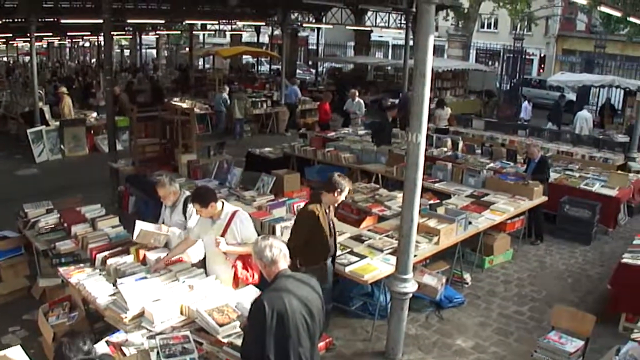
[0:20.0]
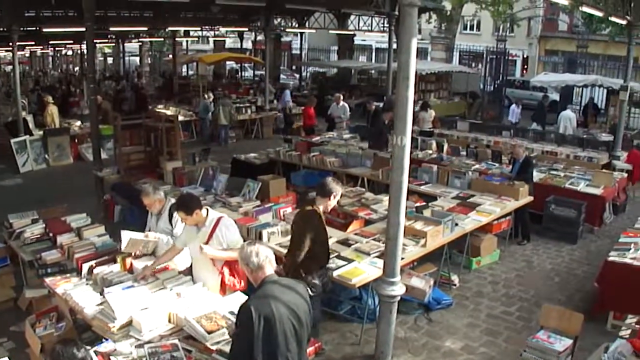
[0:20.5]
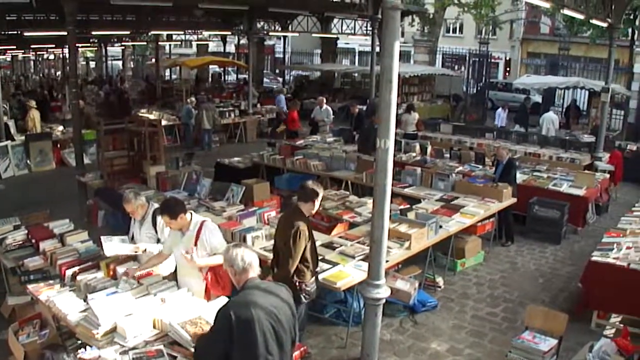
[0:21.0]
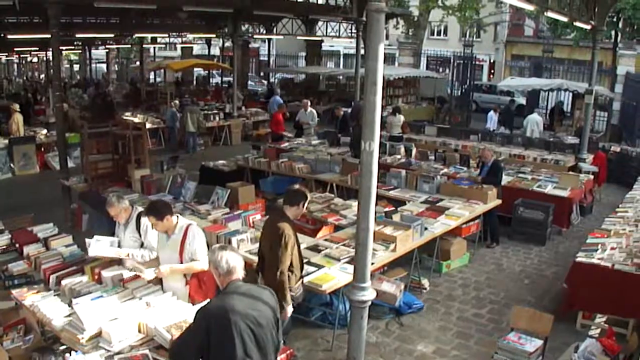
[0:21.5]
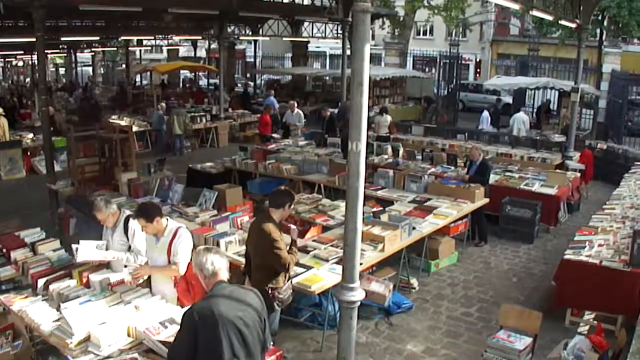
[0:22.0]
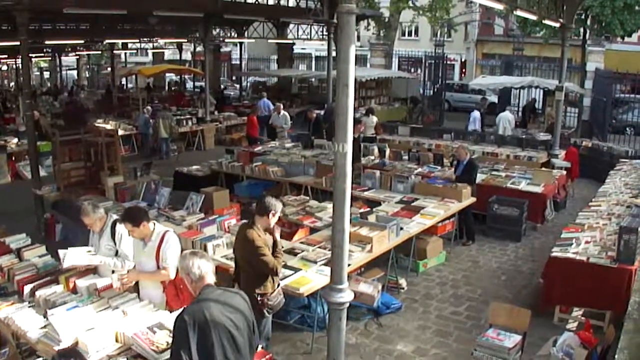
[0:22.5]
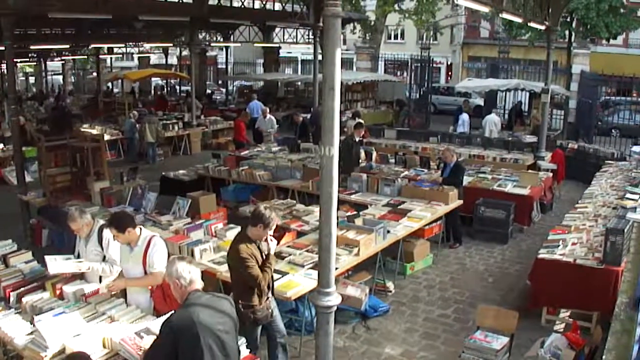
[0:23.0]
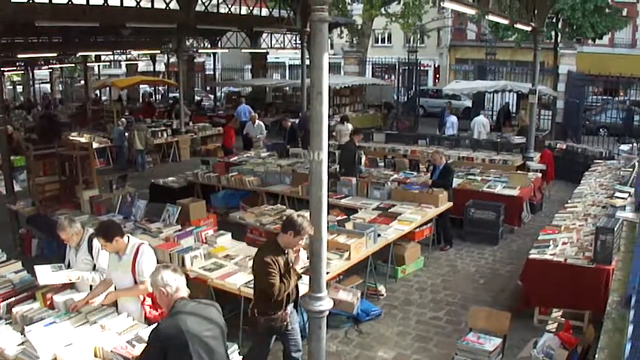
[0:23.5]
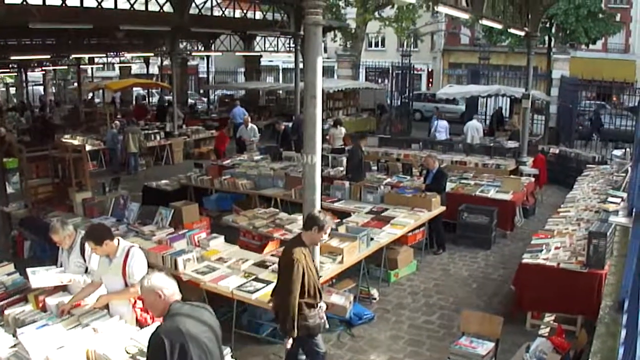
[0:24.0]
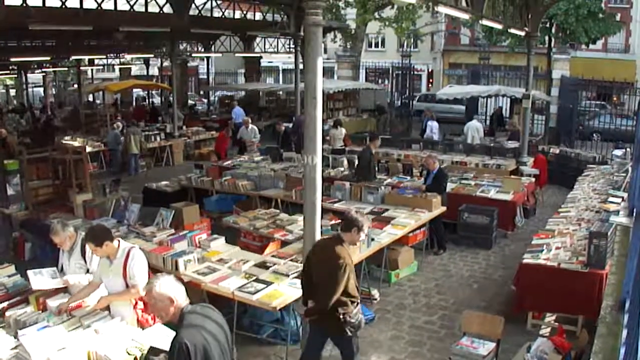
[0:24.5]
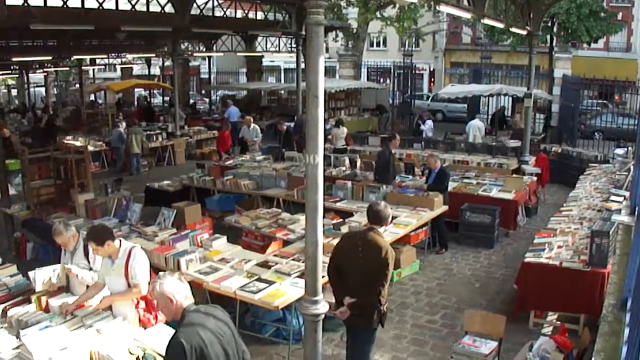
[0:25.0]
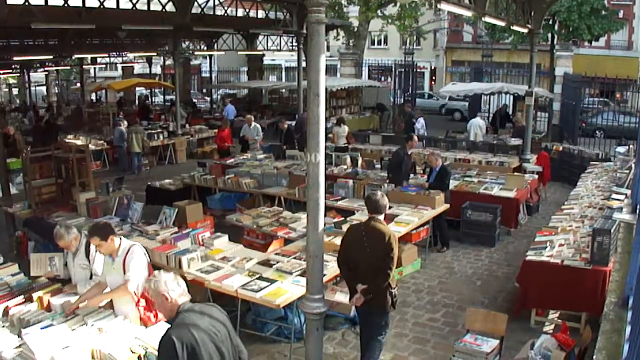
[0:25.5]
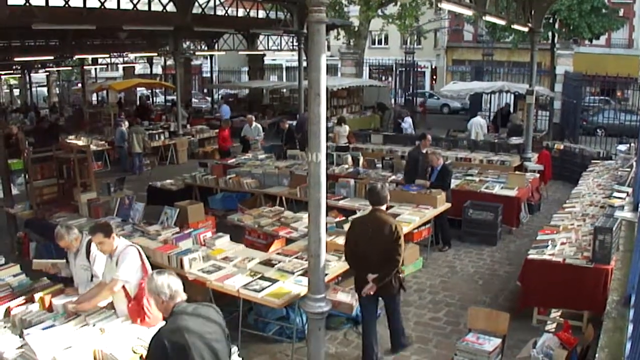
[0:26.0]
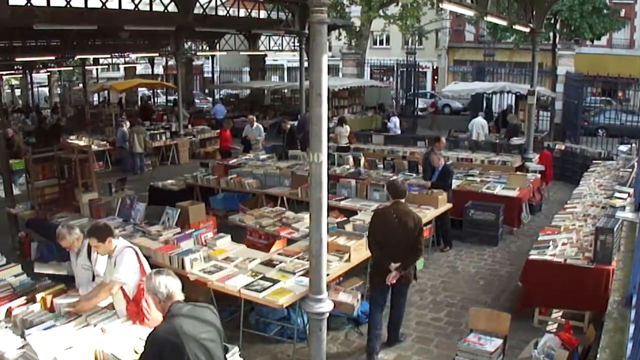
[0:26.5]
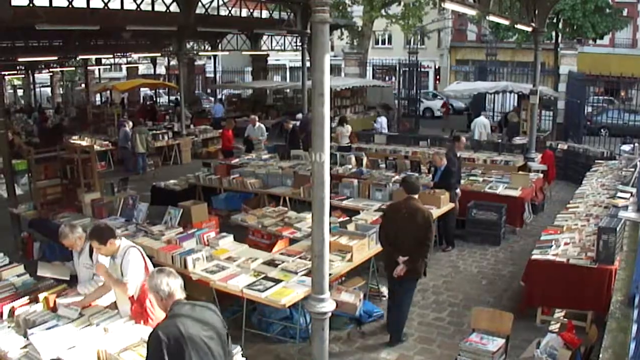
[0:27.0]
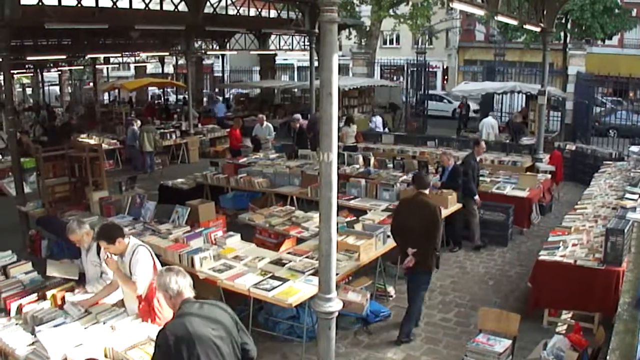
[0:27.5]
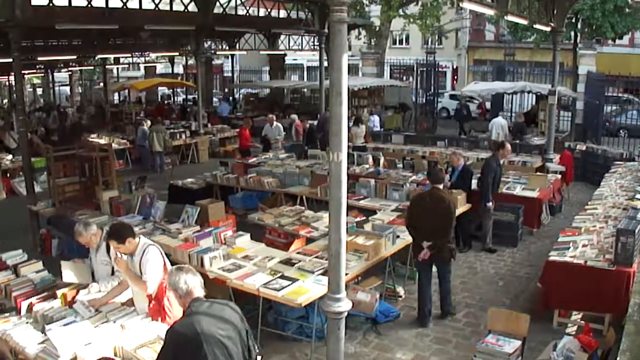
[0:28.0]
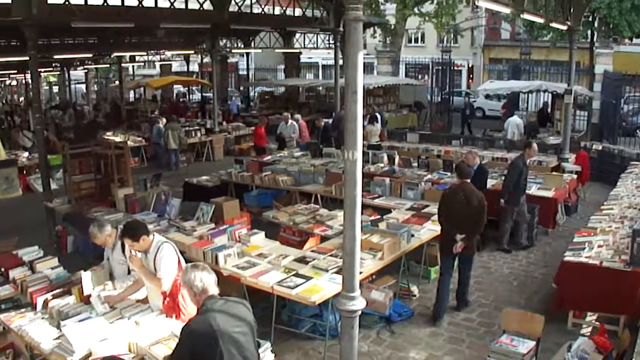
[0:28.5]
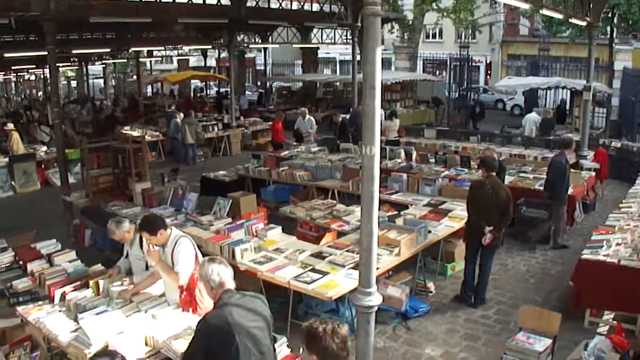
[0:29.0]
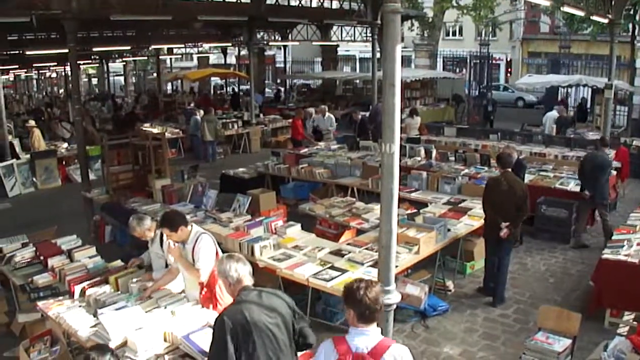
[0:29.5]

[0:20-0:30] Outdoor shopping takes place in what looks like a Main Street area of a charming town. Under what is perhaps temporary roofing, lines of tables are all covered in used books. The books are aged, some with bent covers, and some are stacked in boxes and trays. Shoppers browse the books as they walk around. Across the street from the book sale are some charming stores with architecture reminiscent of the 1950s and 60s on an old-style Main Street. It is daytime, and green trees line the street.